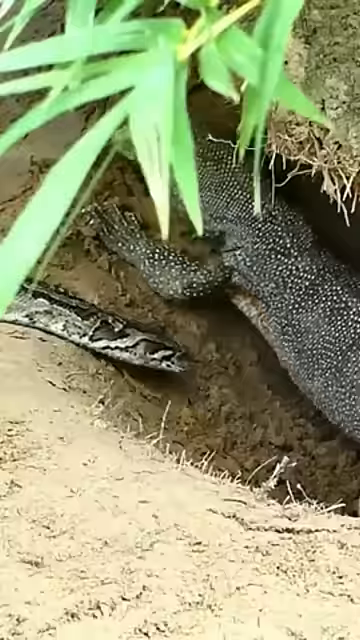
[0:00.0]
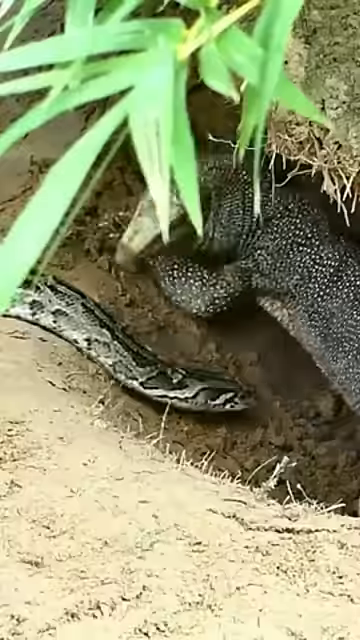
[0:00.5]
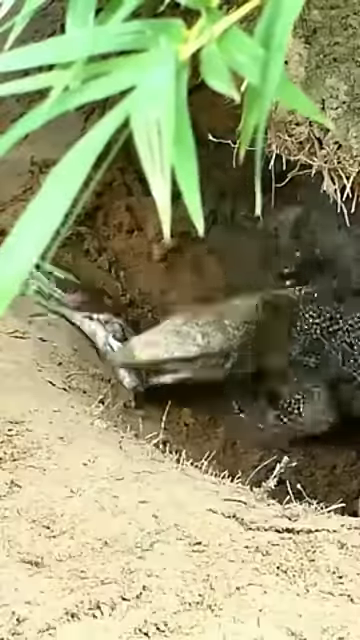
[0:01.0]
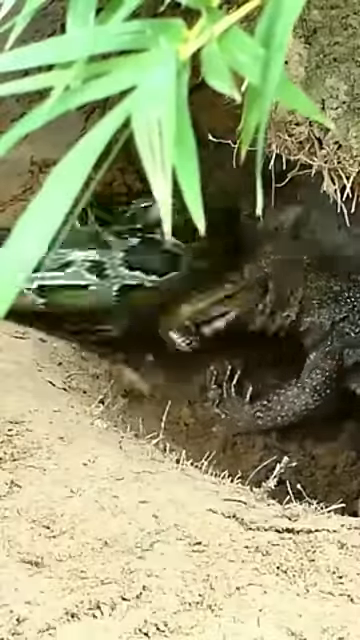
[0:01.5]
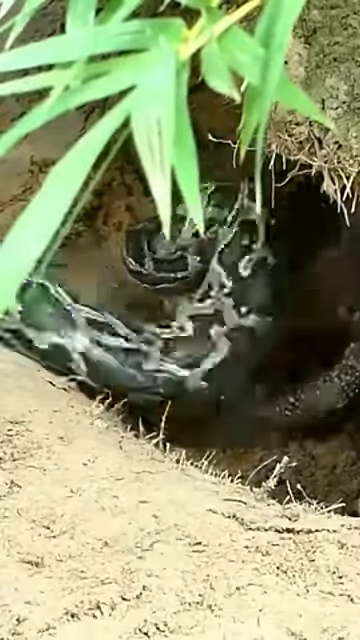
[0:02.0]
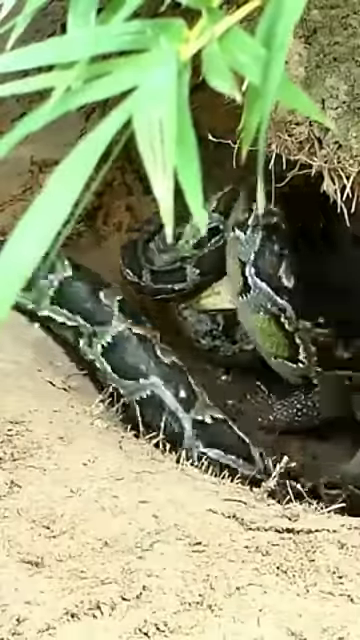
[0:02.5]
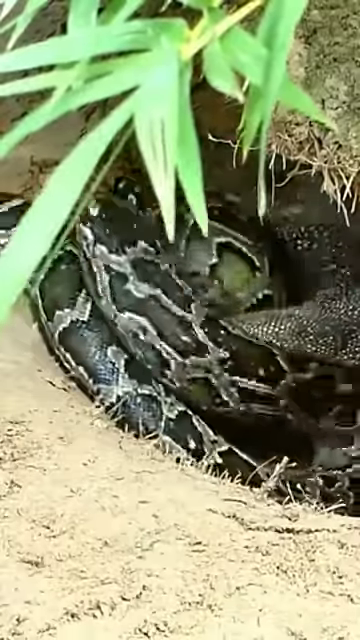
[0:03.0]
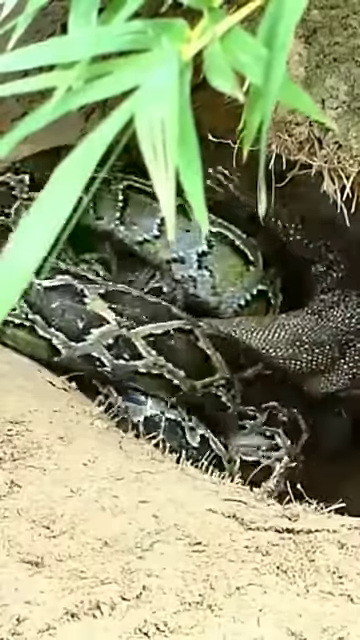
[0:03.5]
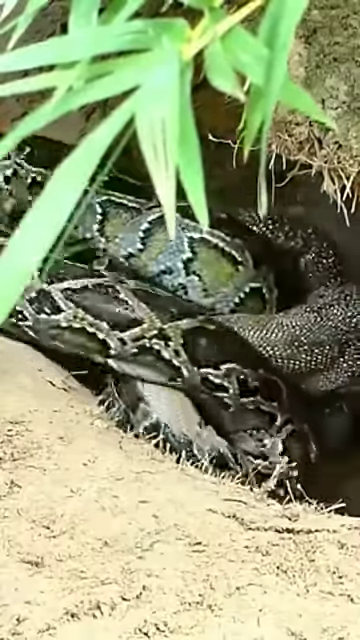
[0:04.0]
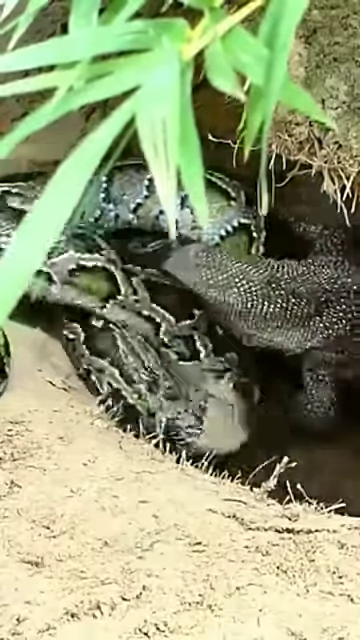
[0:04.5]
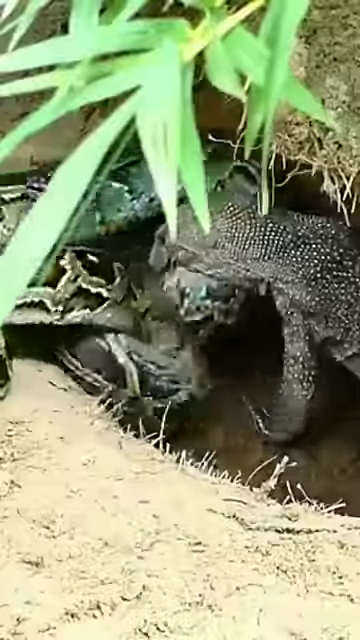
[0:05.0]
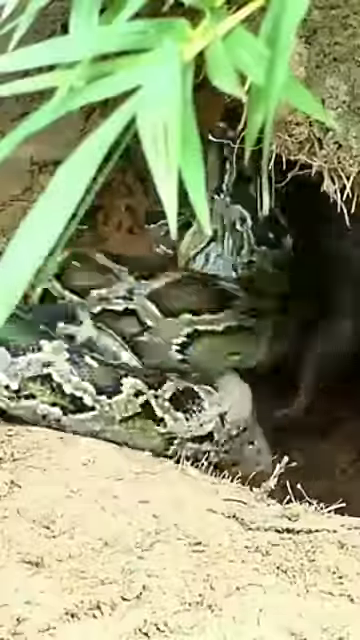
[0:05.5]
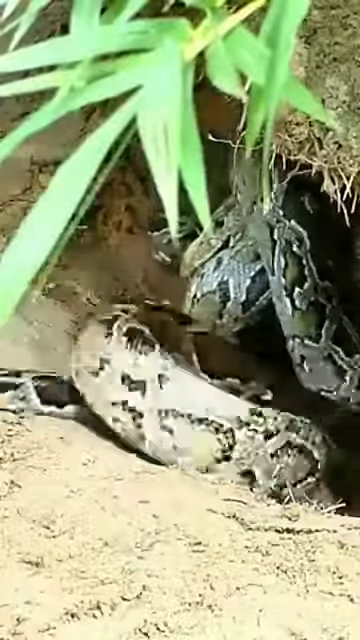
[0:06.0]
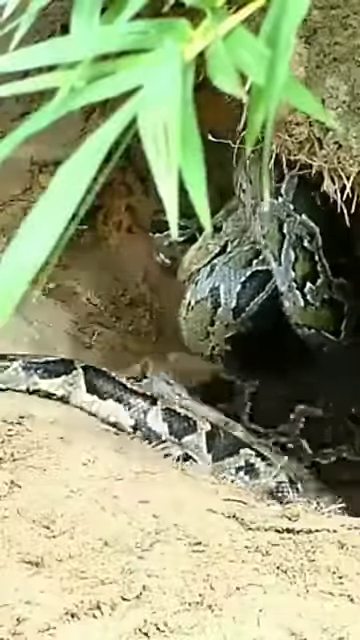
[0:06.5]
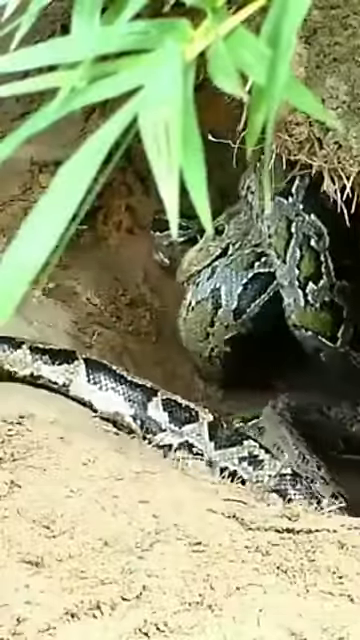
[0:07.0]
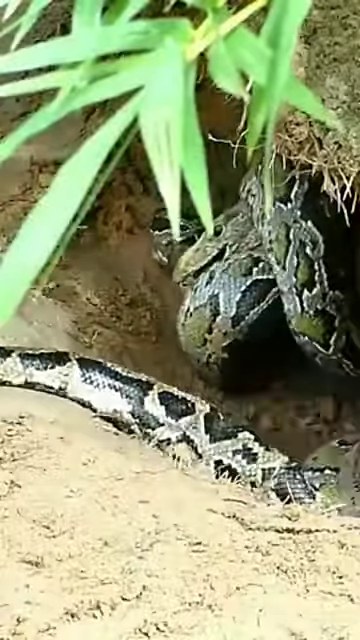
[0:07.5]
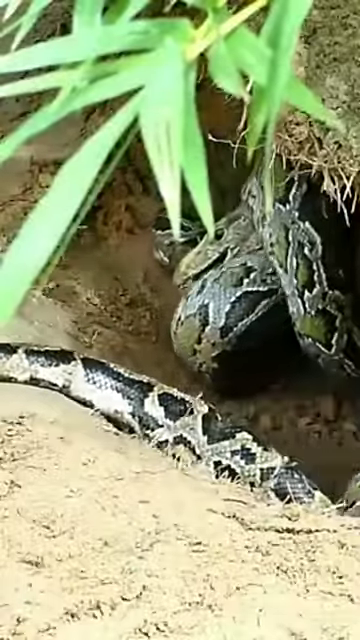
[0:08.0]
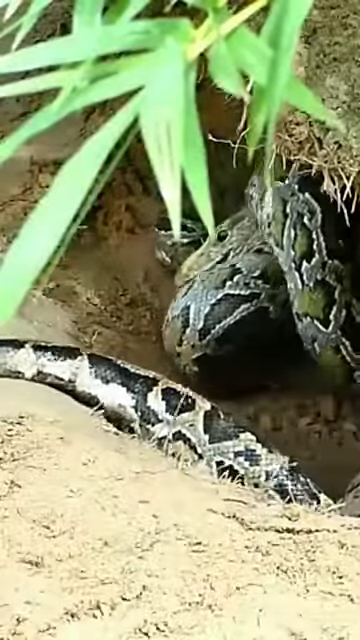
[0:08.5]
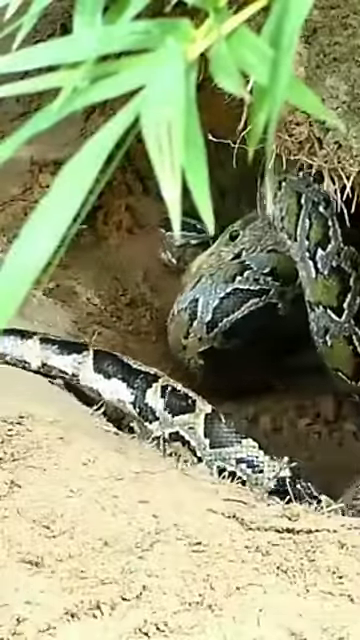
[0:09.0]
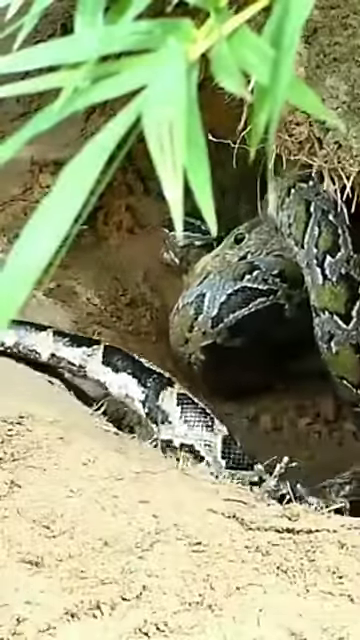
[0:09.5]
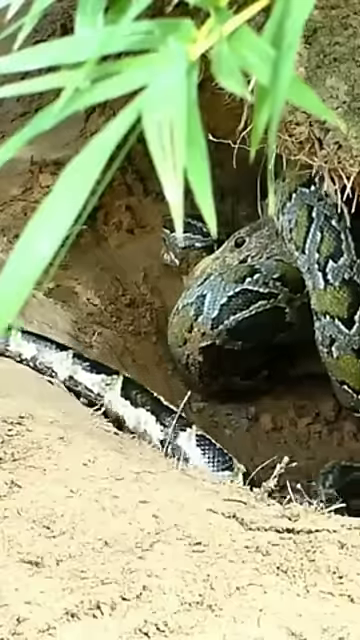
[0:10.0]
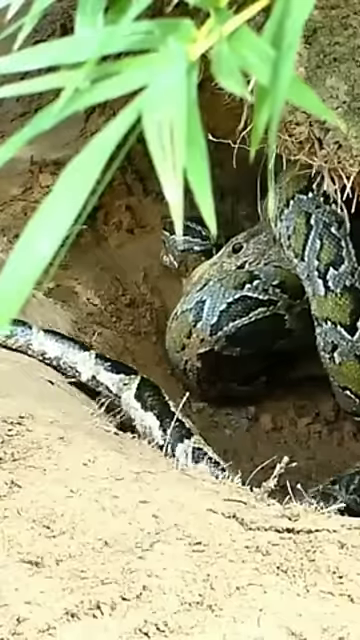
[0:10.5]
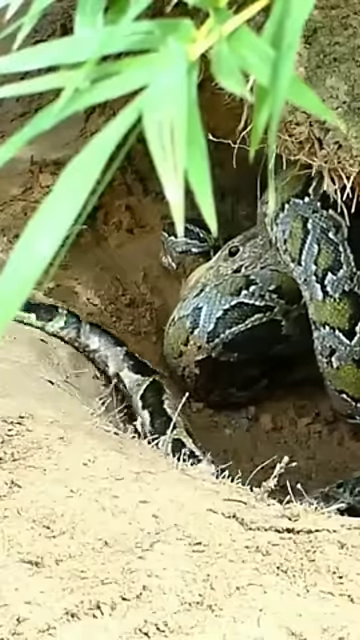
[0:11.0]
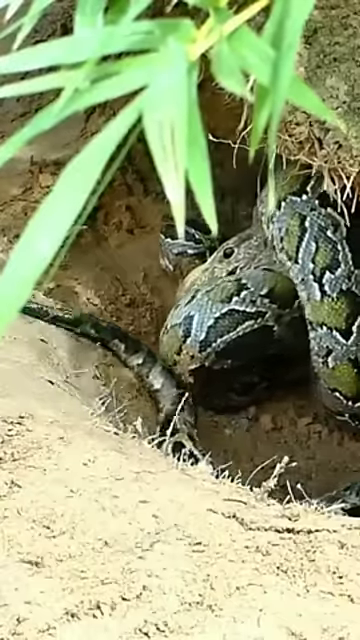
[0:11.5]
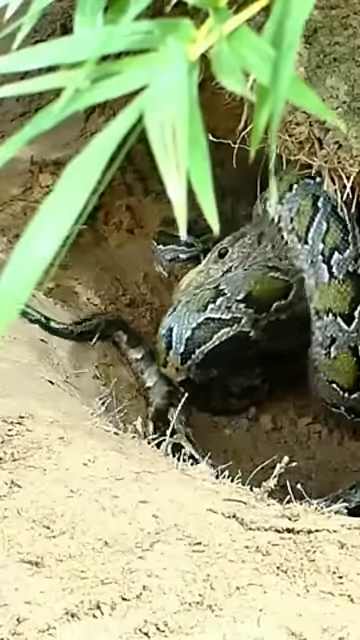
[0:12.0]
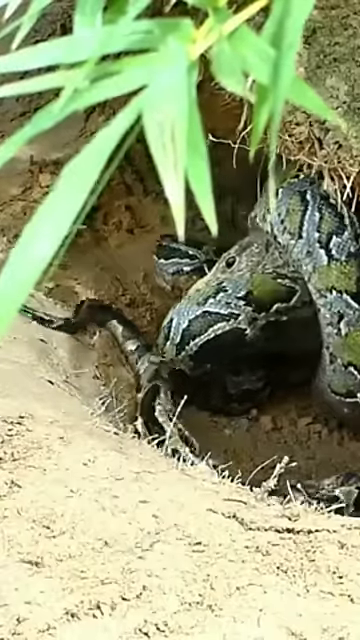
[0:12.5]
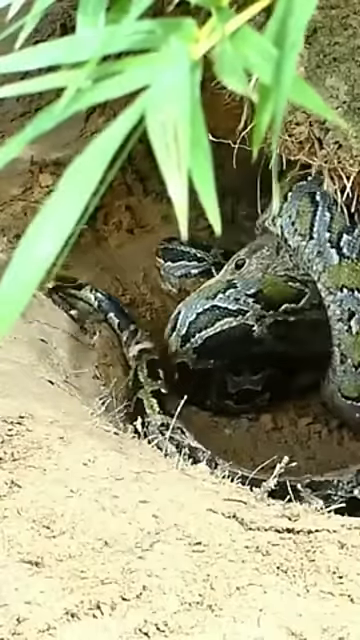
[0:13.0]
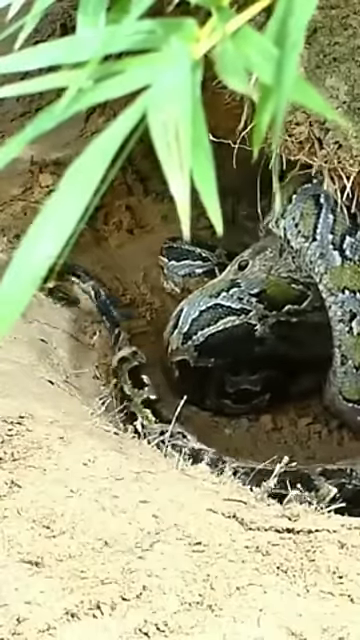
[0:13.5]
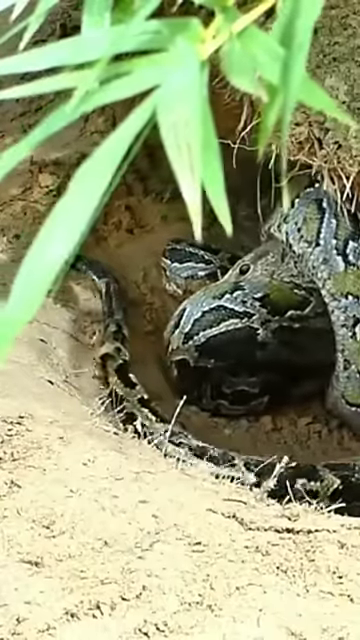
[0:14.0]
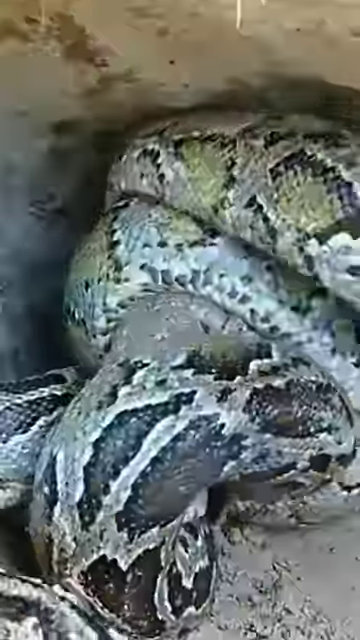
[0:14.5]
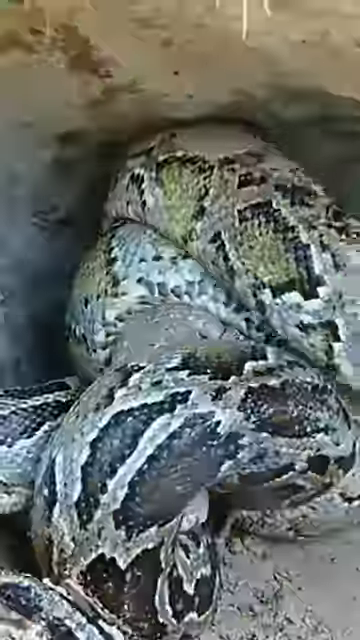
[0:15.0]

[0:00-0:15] A snake and an unidentified animal fight, one trying to capture the other for food. They are in what looks like a small hole, almost like a trench, which the snake appears to be in to capture the other animal. The snake, of an unidentified type, attacks and has the other animal in its grip. The snake seems to be winning and probably wins the battle.